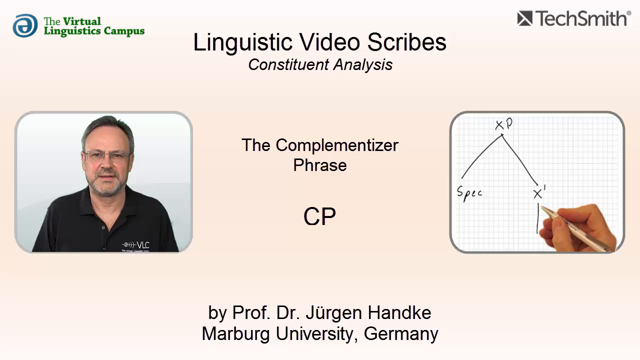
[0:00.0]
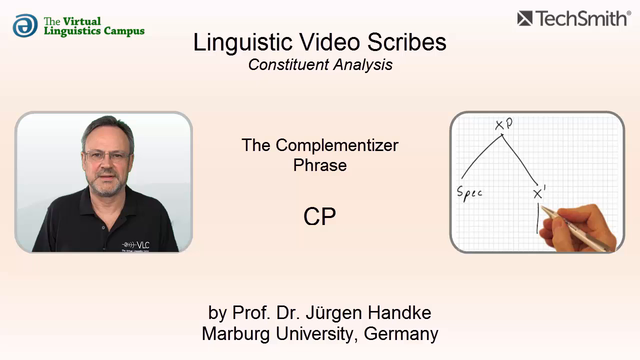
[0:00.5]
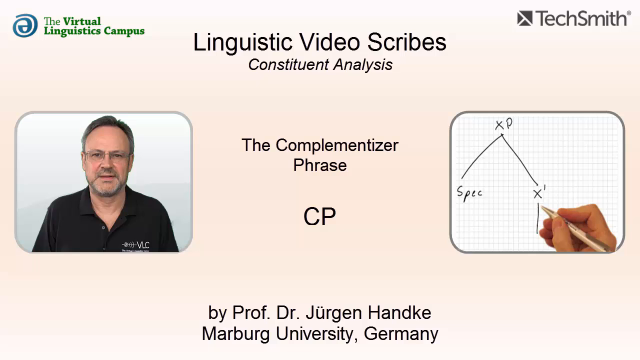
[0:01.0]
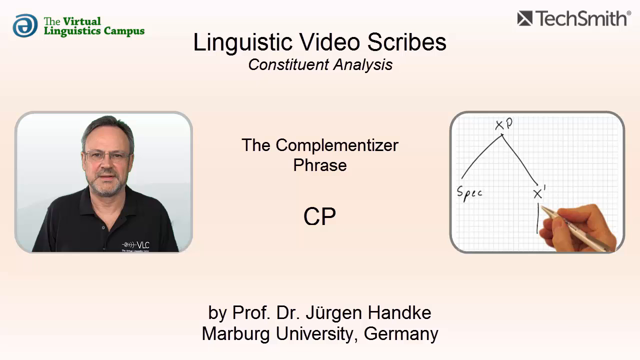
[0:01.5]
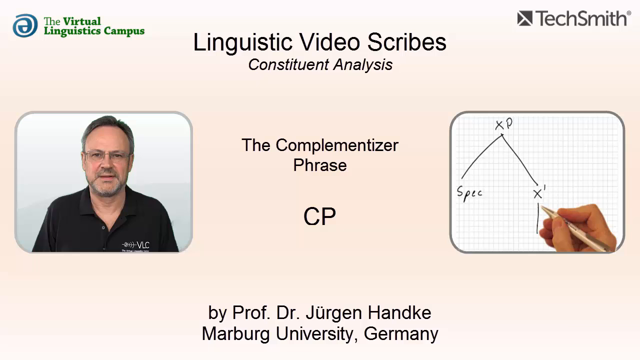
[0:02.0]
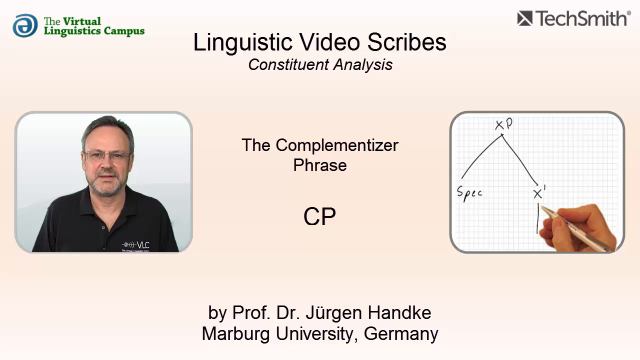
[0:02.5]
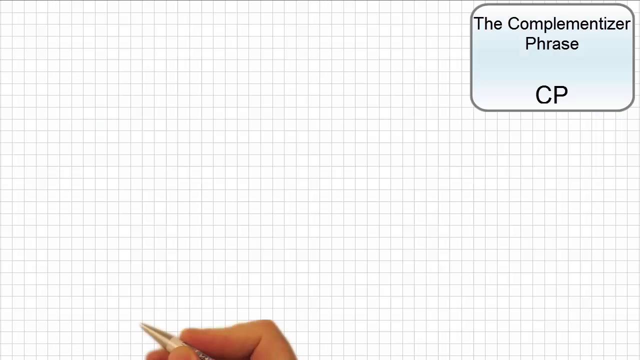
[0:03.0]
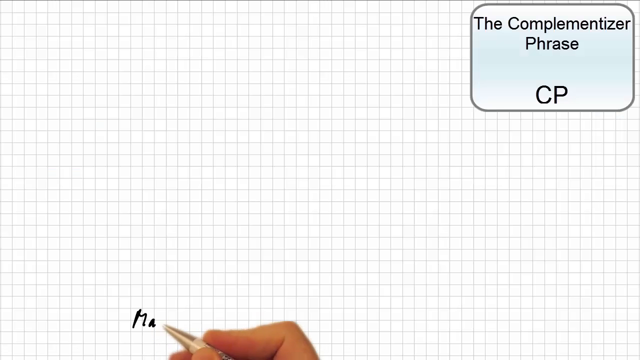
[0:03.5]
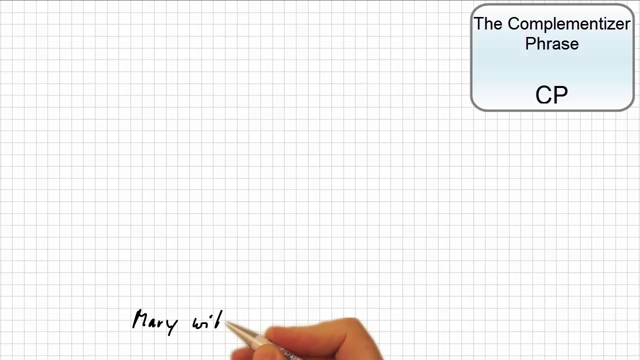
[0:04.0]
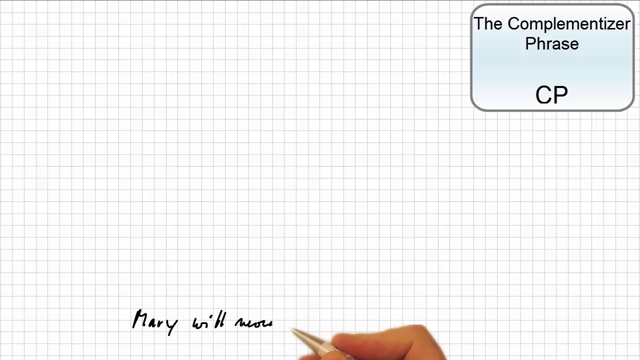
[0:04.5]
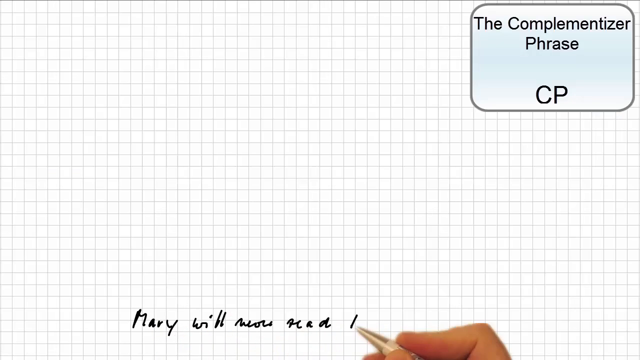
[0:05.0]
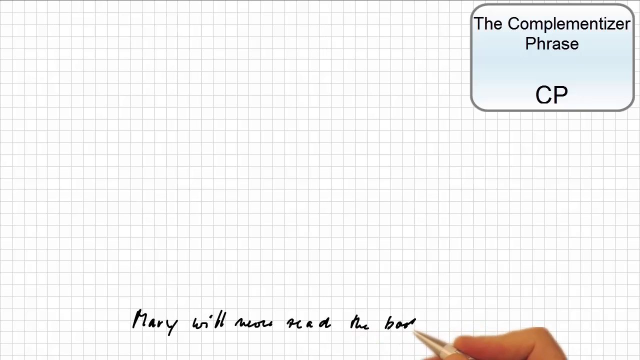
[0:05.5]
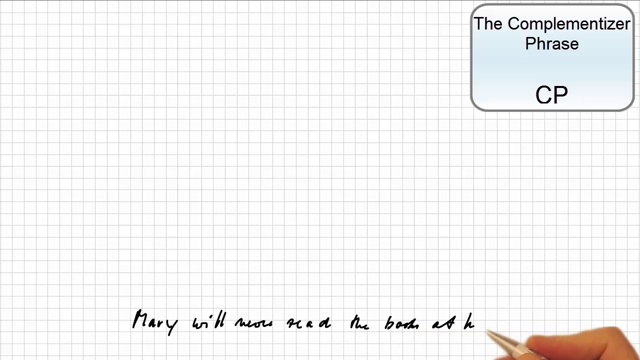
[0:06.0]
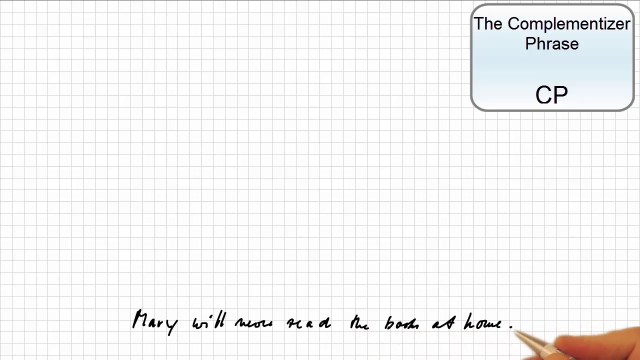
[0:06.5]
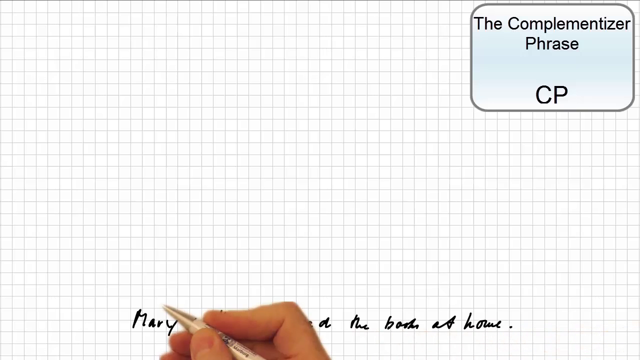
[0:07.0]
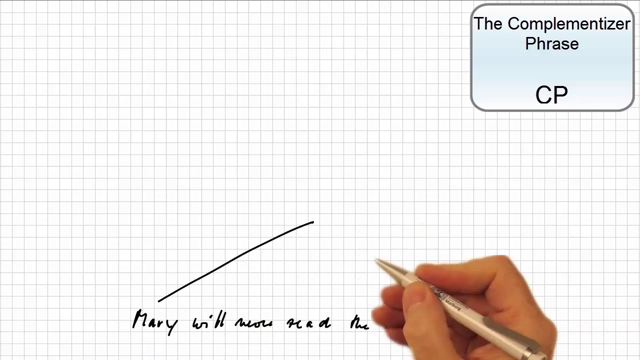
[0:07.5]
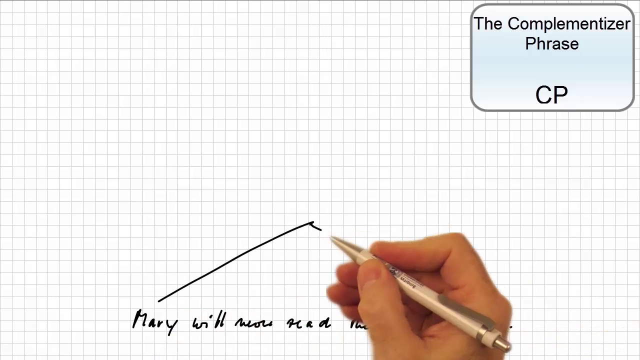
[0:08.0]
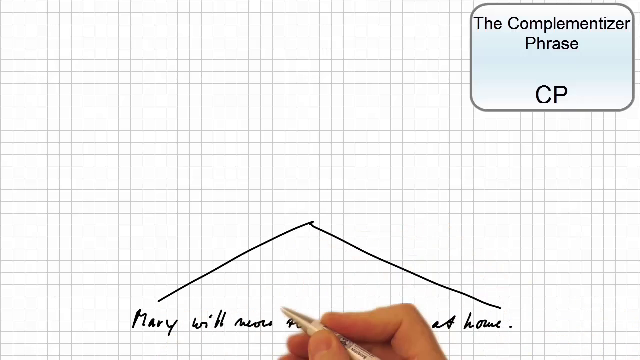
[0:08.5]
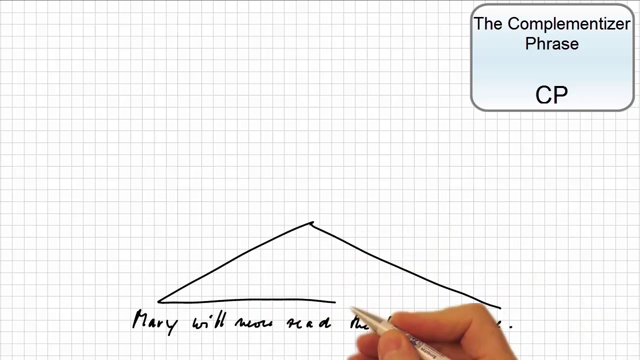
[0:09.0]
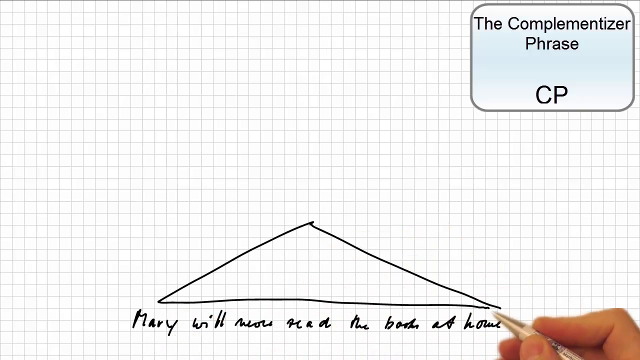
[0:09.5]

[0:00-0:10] The video is a linguistics lesson on constituent analysis and the complementizer phrase (CP), by Professor Dr. Jürgen Hanke of Marburg University, Germany. On the left is his profile picture, and on the right are scraps from a notebook. After a moment, he writes a triangle with a black pen, holding the pen in his right hand. The complementizer phrase label is shown in a box.